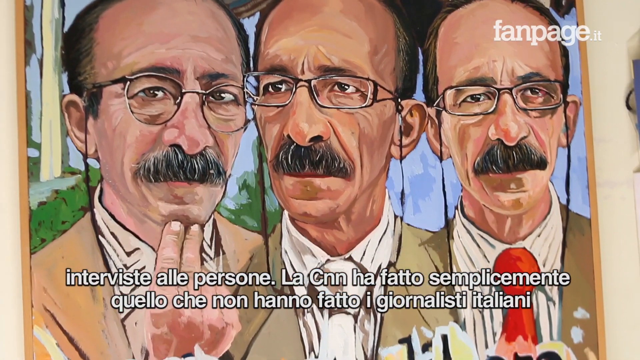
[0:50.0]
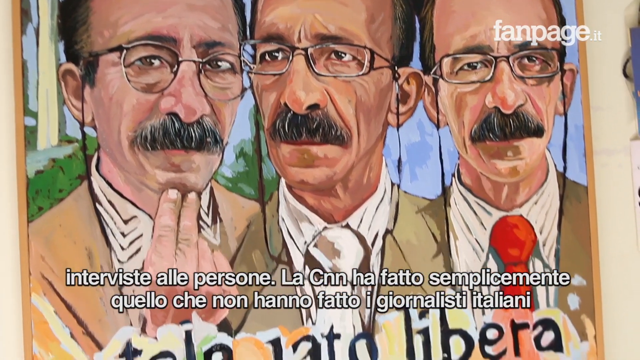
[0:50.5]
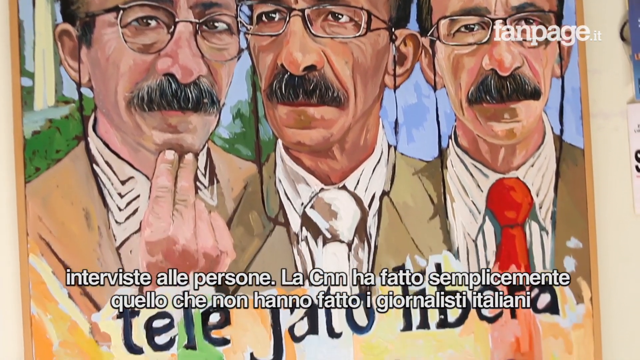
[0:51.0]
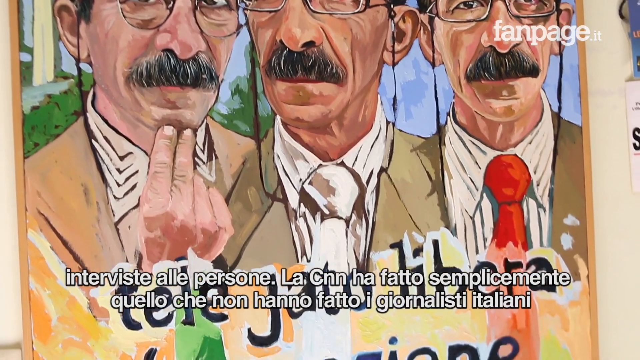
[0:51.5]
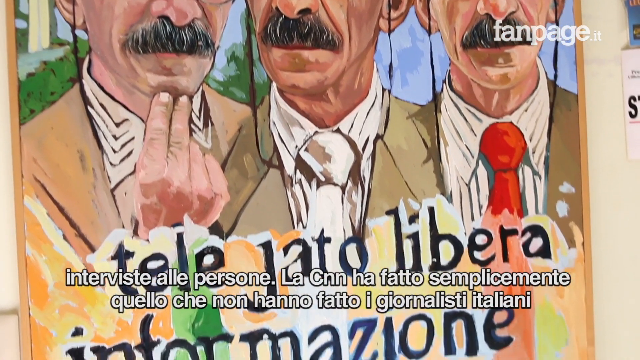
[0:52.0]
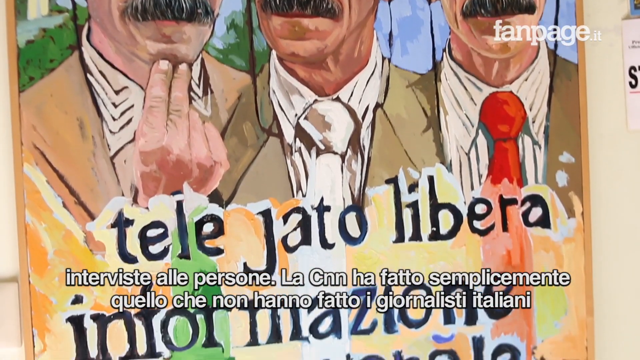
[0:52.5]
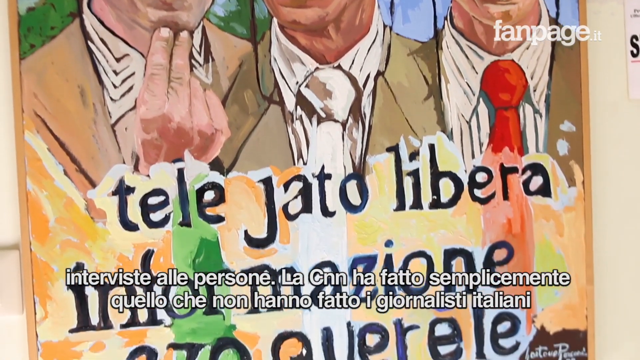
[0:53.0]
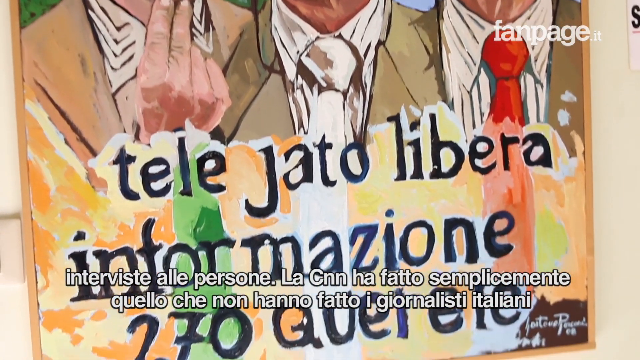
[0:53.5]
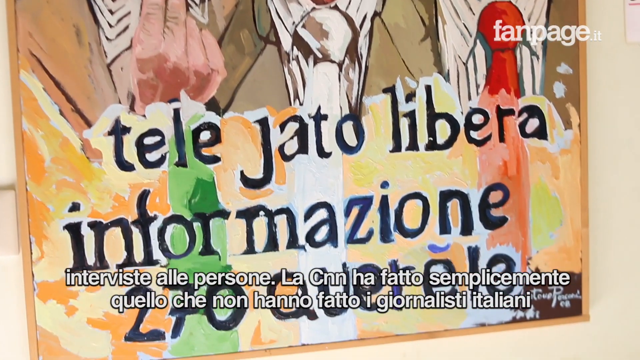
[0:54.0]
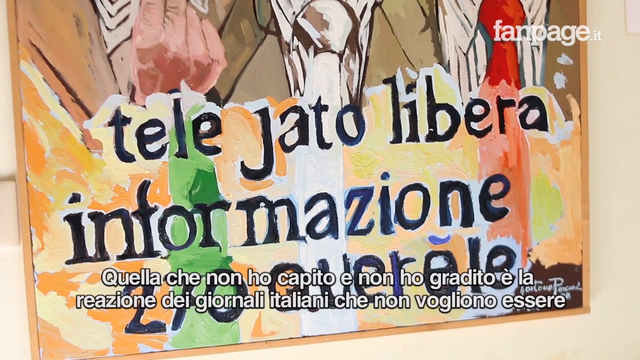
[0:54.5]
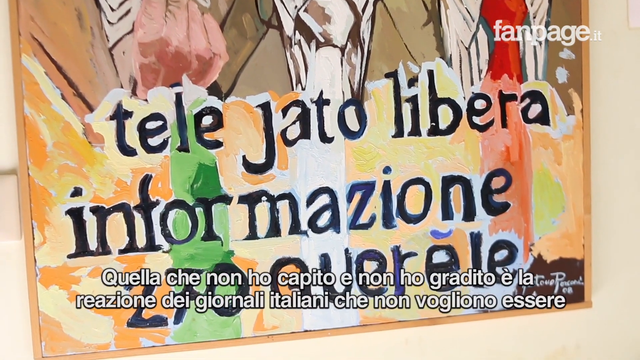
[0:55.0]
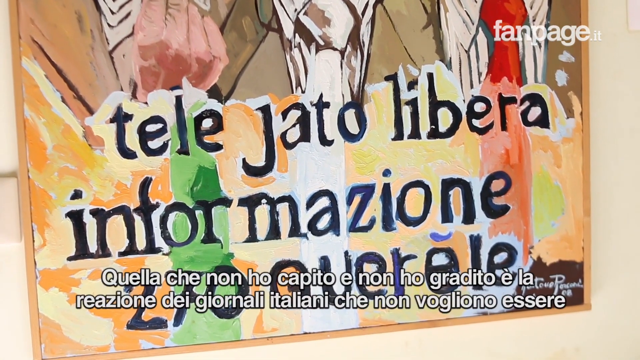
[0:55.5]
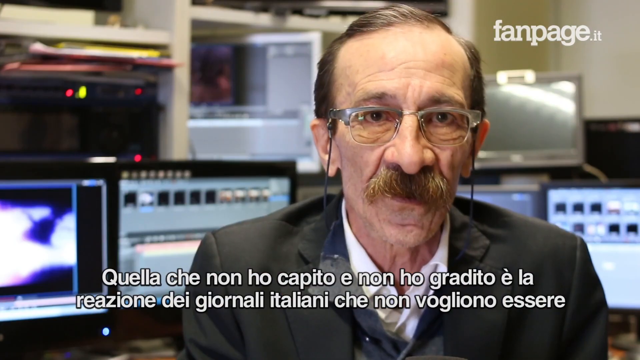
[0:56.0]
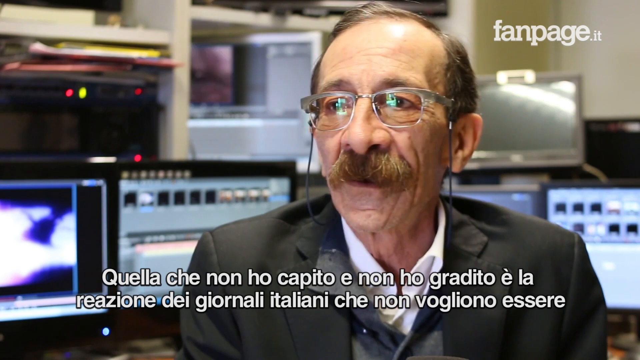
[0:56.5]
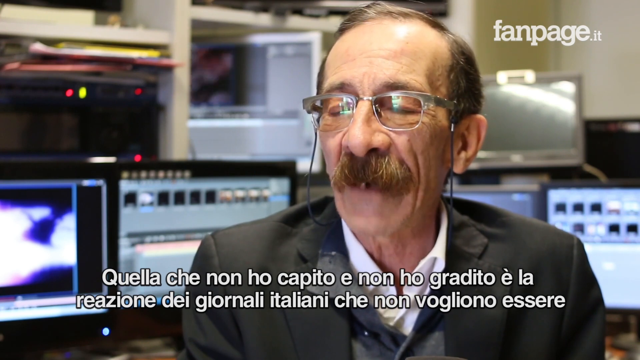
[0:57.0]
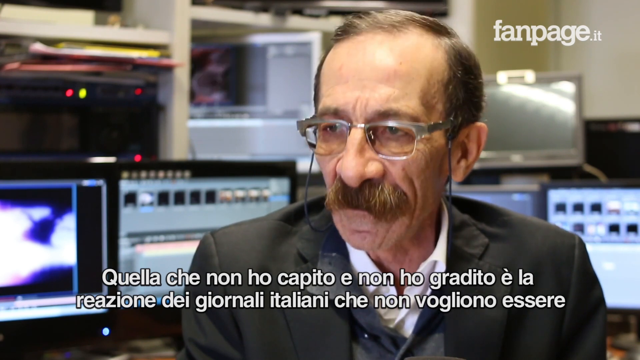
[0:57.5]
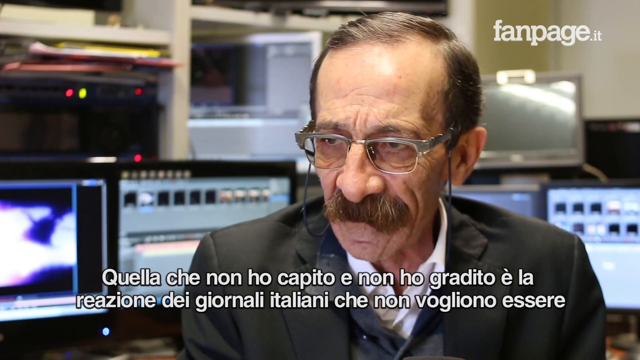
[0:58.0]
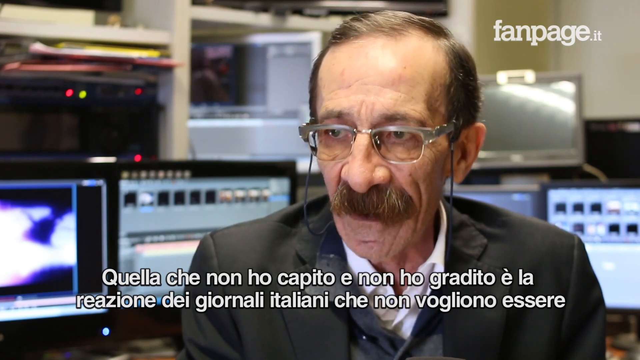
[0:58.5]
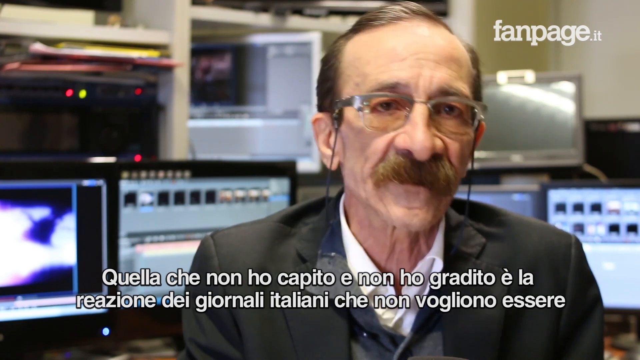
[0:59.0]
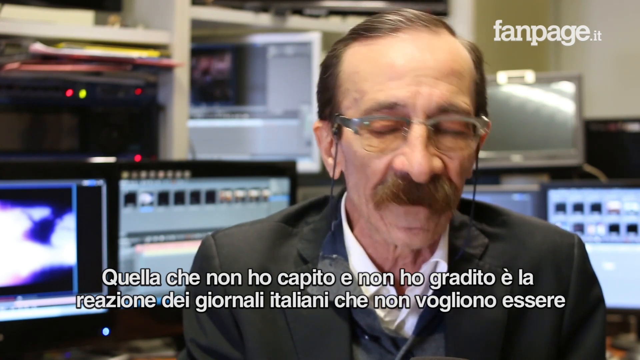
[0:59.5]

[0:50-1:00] The painting shows an old man with a receding hairline, glasses and a distinctive moustache but no beard; apart from the moustache and eyebrows his face is clean shaven. He appears in the painting three times, in slightly different positions and slightly different clothing. The camera pans down to the Italian writing at the bottom of the poster or painting. The next scene shows the old man with glasses and the distinctive moustache talking. He first looks to his right into the distance, then moves his head to the left to emphasize his point, moving his face animatedly the whole time.